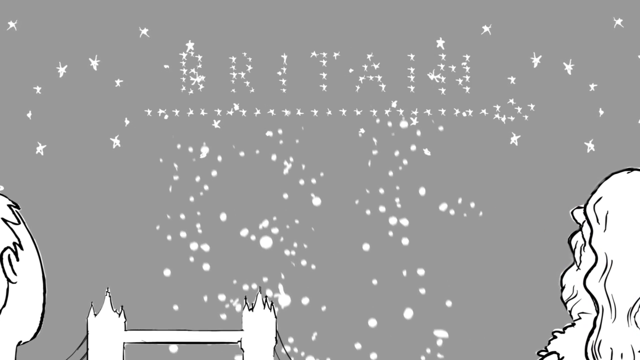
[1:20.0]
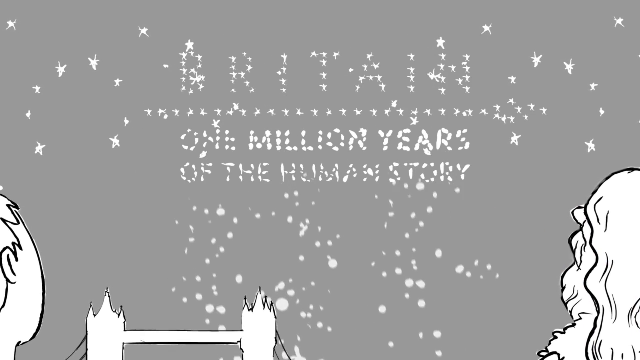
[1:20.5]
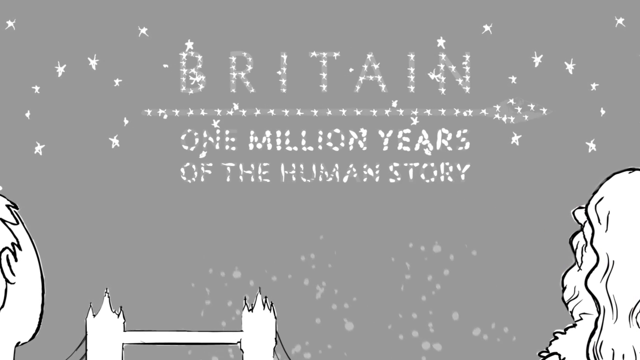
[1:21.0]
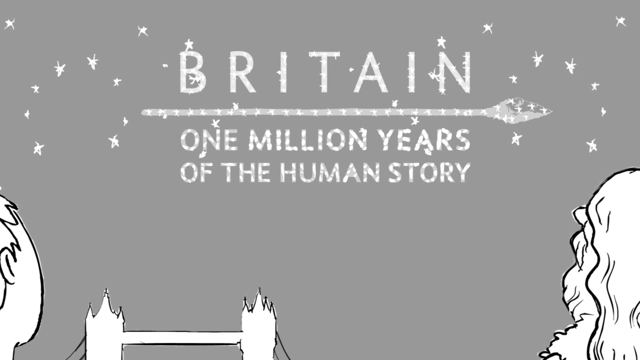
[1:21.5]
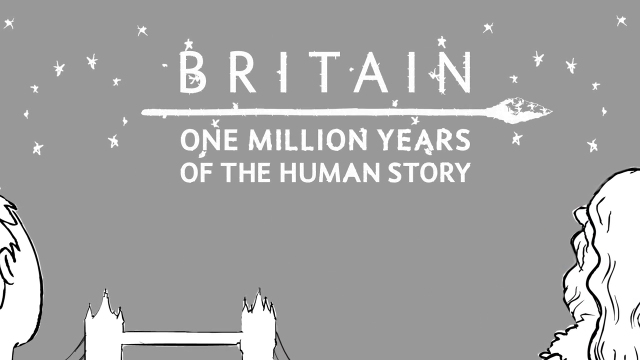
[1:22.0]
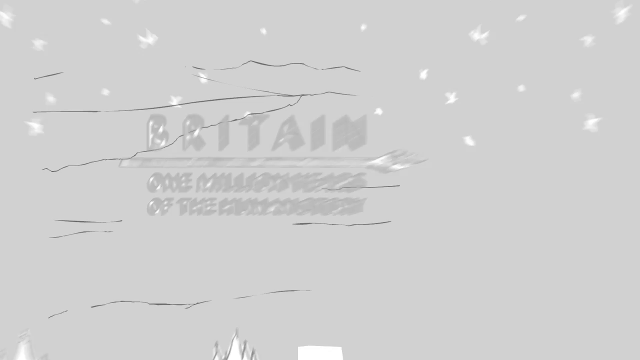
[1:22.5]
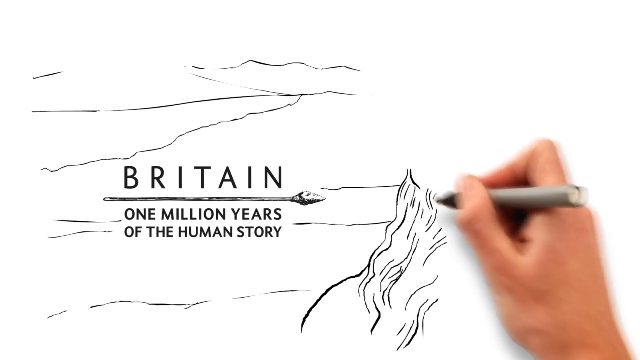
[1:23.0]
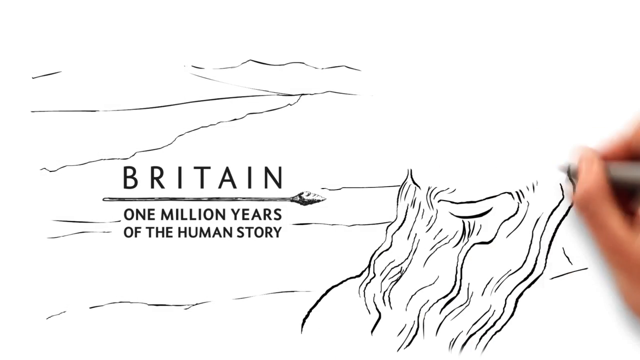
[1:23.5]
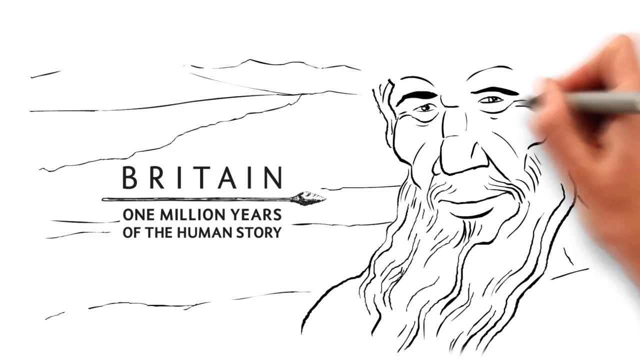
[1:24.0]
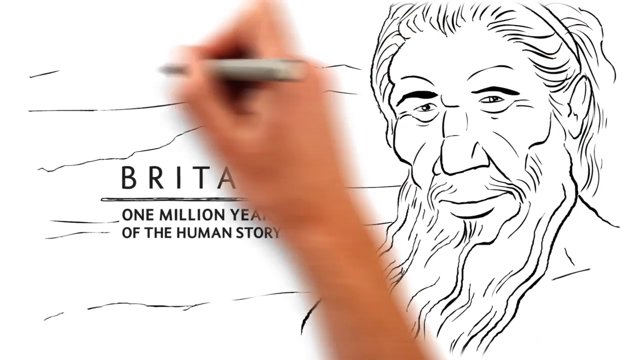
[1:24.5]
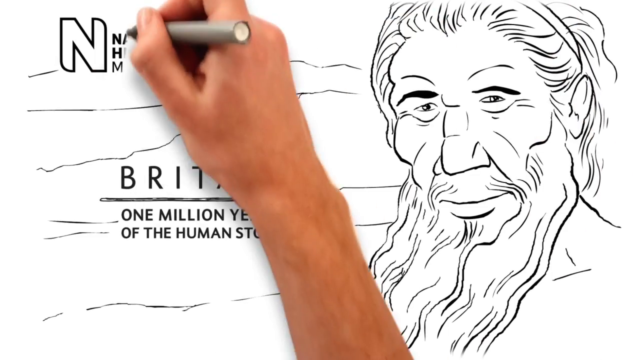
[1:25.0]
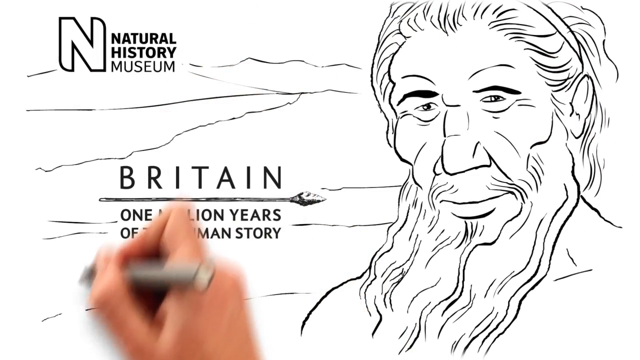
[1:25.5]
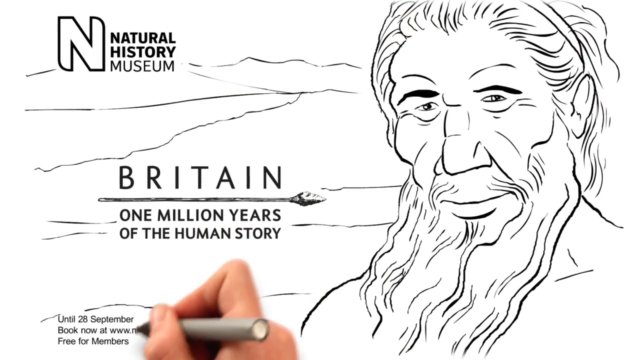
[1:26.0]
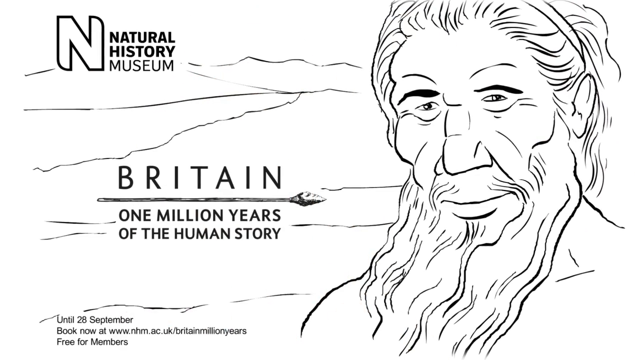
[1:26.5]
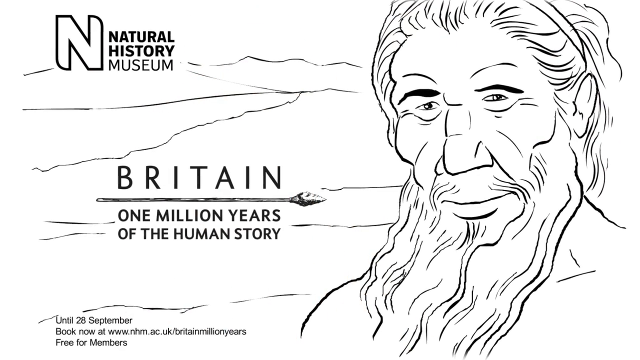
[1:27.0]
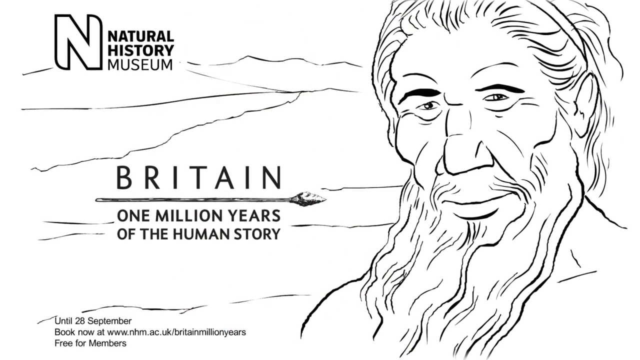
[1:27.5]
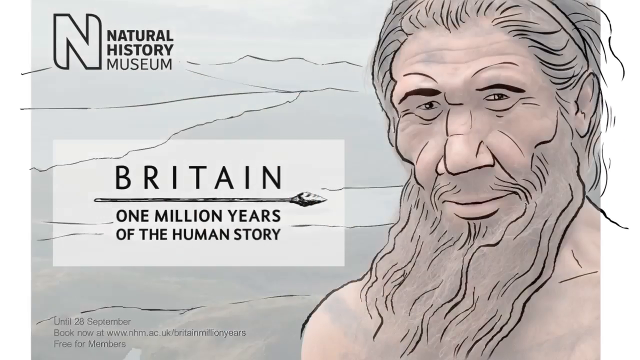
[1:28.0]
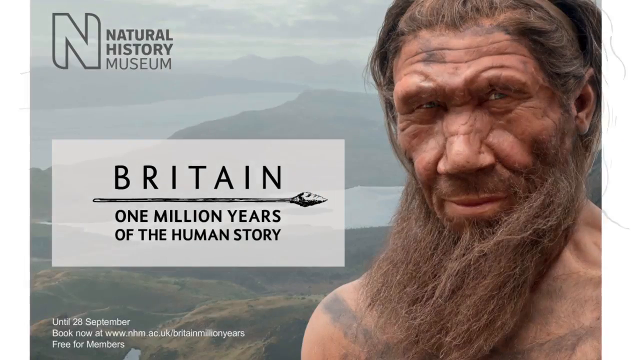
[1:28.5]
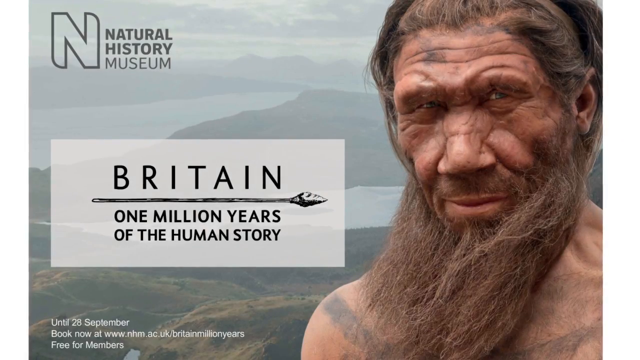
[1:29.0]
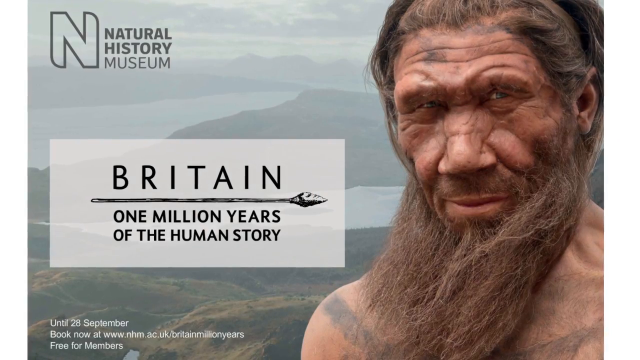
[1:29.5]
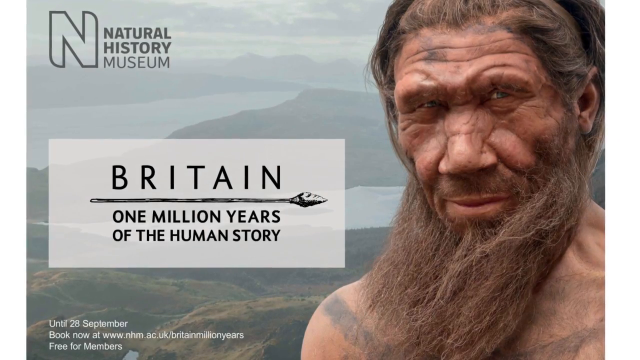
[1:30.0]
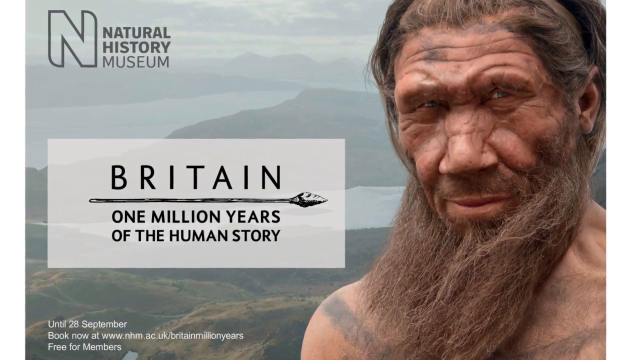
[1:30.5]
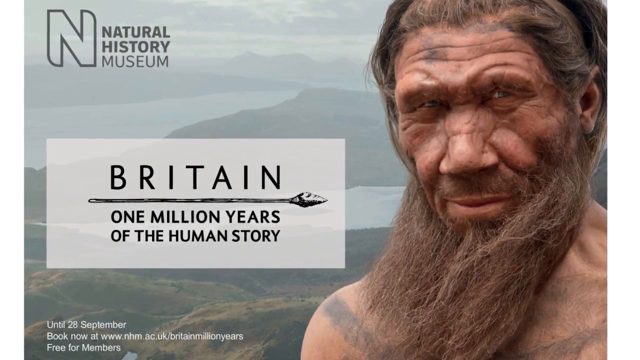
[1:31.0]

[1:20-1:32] The image shows the modern man on the left and the caveman character on the right, both looking up at the sky and the stars. Text that appears to be made of stars reads "Britain 1 million years of the human story," and it then turns into solid lettering. The title moves to the bottom left of the screen, and a close-up of the long-haired caveman character's face appears on the right side of the screen. At the top, text reads "natural history museum" with a giant N on the left-hand side of it. The image now looks more realistic instead of being a drawing, with the caveman looking like a realistic figure, like a wax figure.